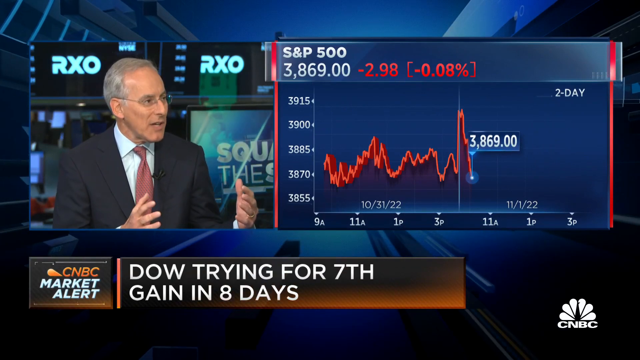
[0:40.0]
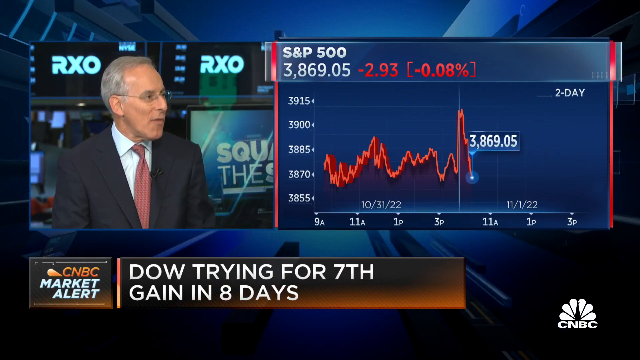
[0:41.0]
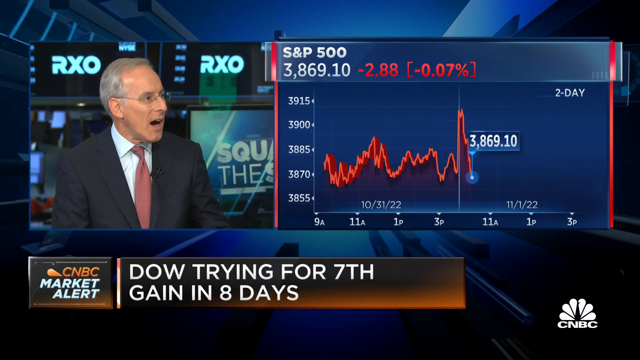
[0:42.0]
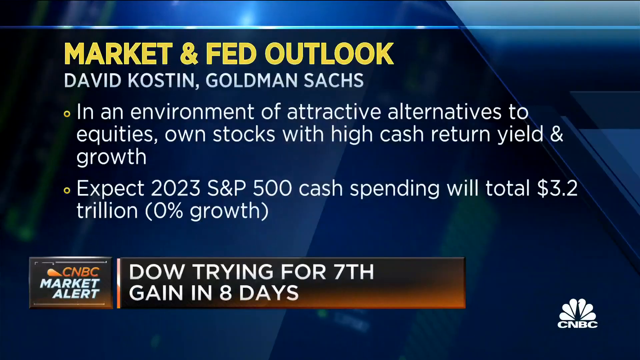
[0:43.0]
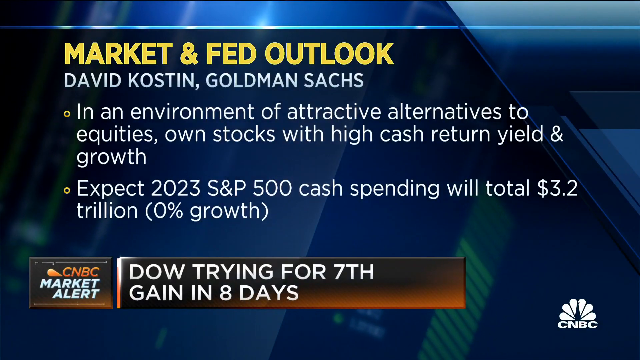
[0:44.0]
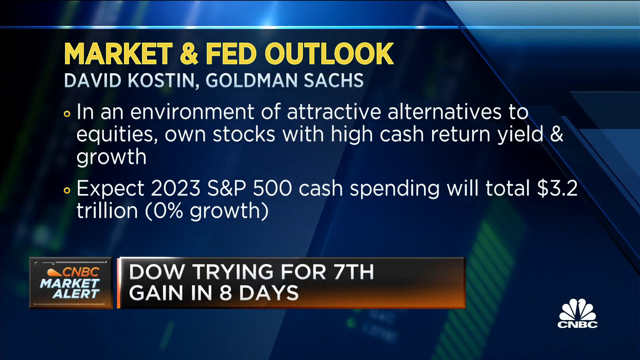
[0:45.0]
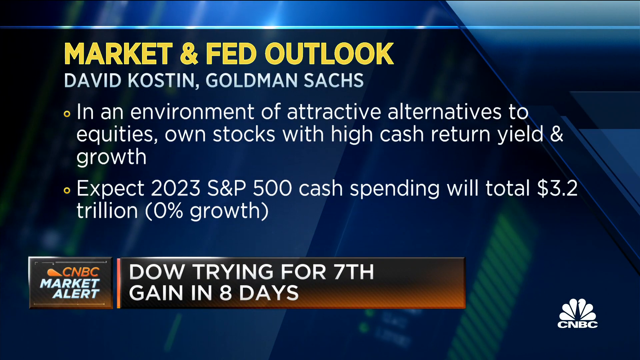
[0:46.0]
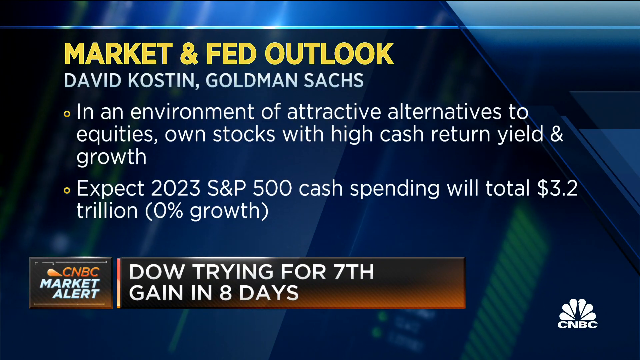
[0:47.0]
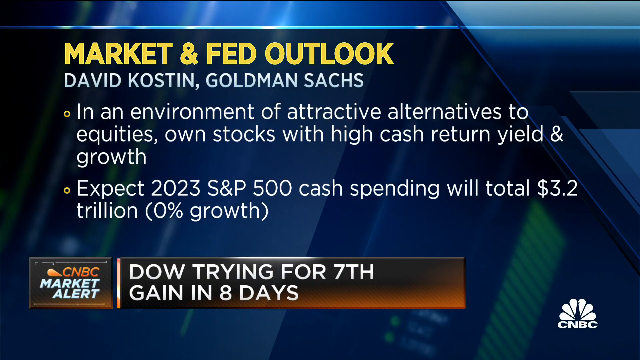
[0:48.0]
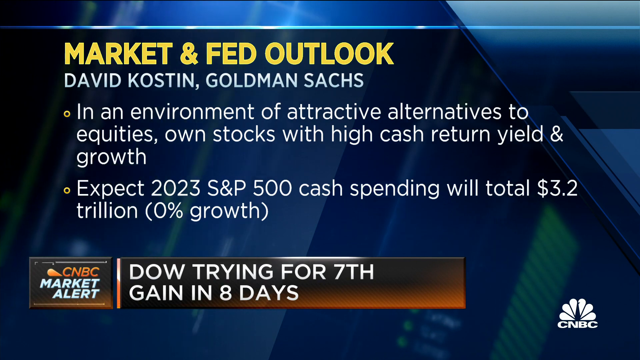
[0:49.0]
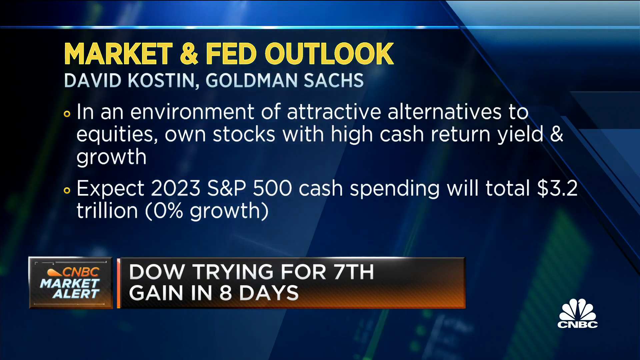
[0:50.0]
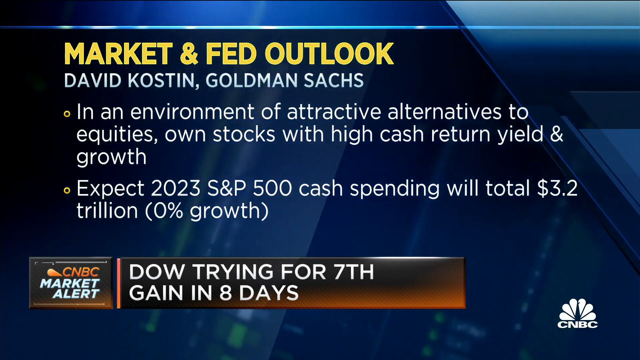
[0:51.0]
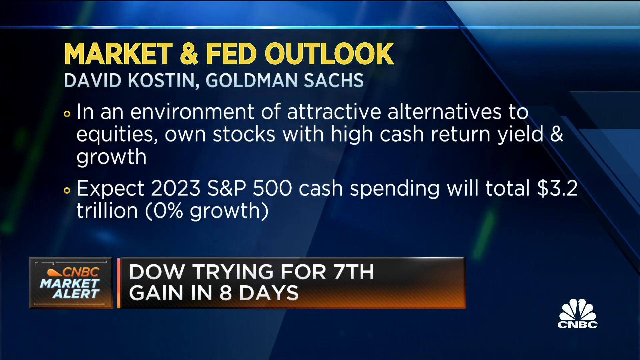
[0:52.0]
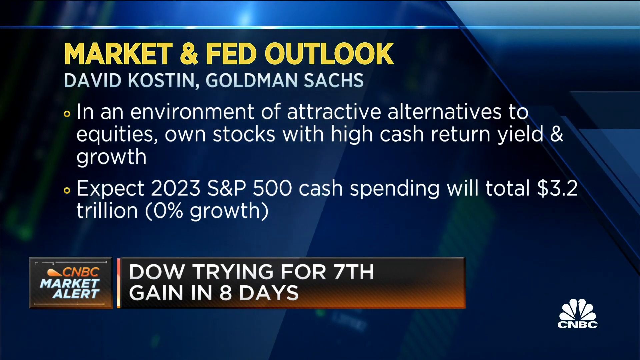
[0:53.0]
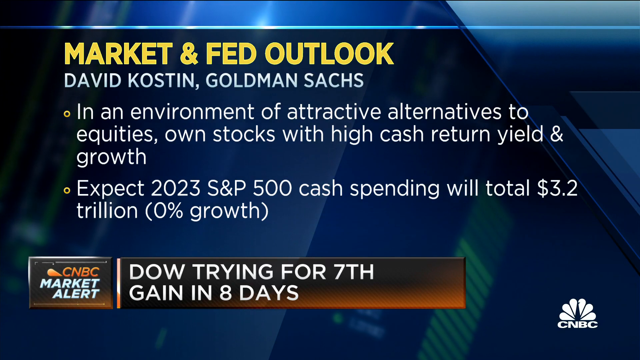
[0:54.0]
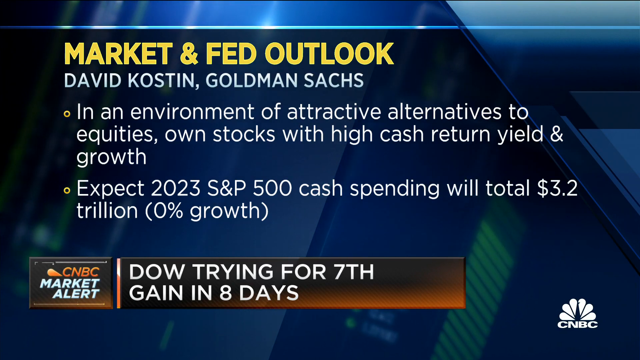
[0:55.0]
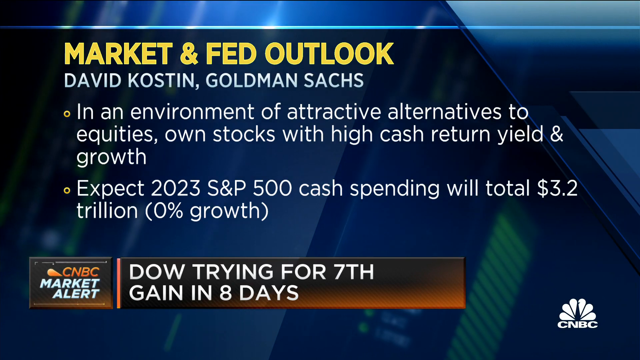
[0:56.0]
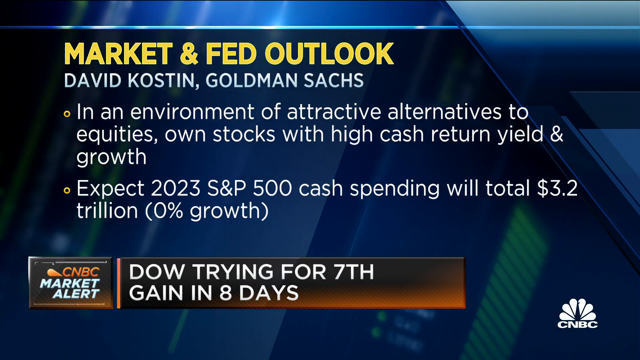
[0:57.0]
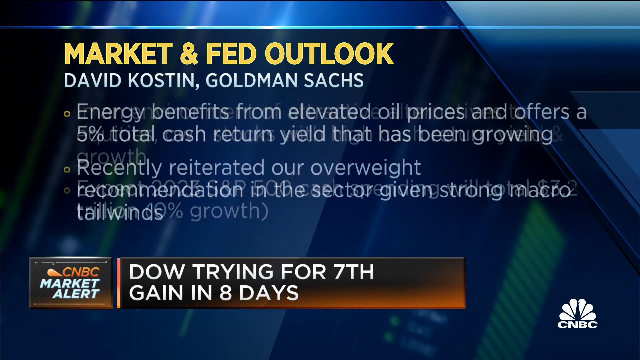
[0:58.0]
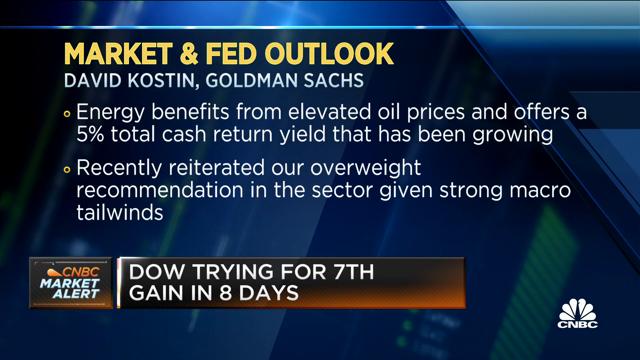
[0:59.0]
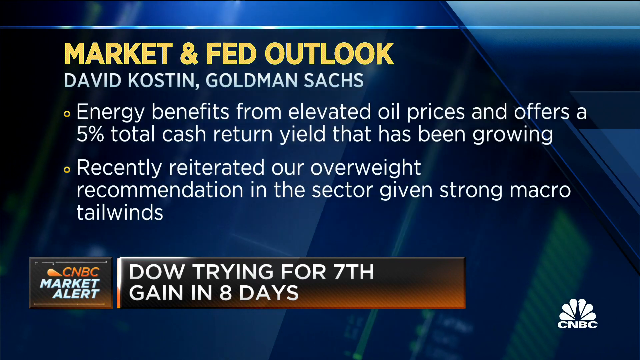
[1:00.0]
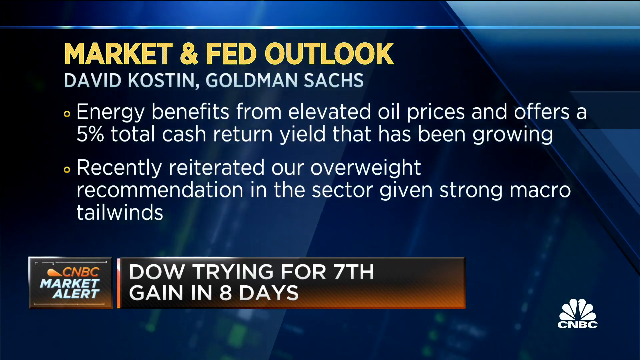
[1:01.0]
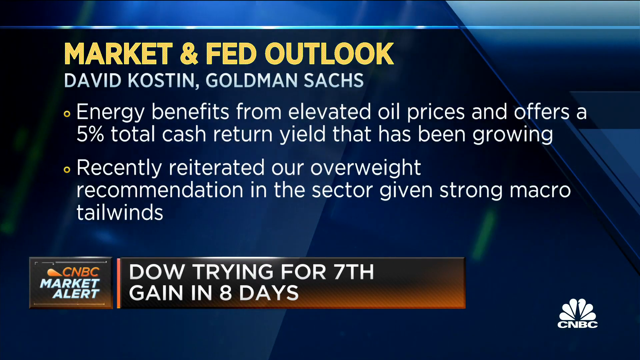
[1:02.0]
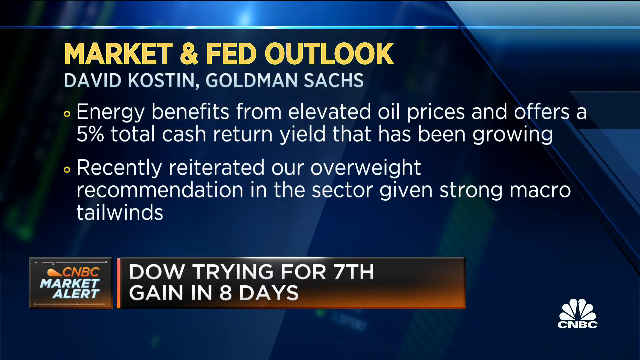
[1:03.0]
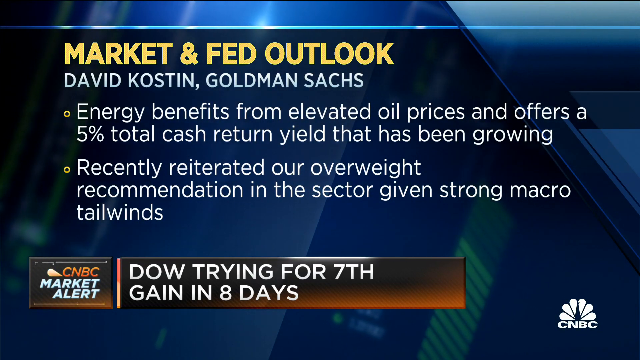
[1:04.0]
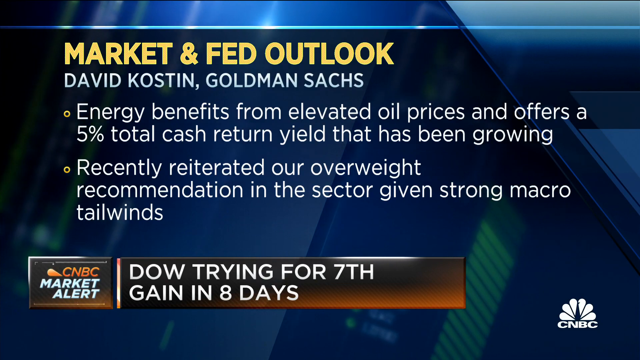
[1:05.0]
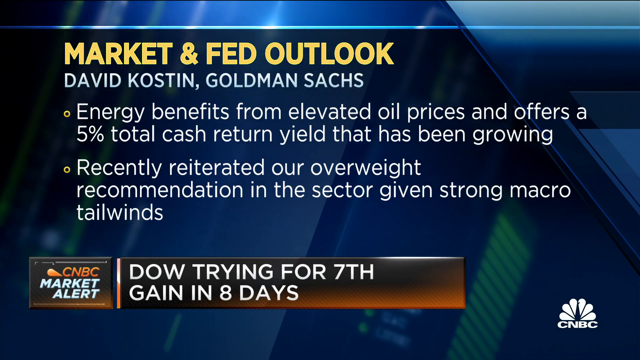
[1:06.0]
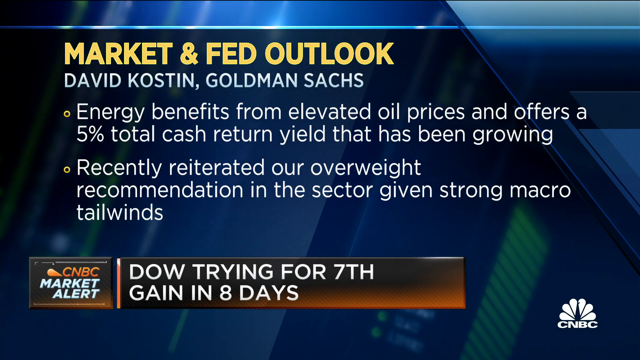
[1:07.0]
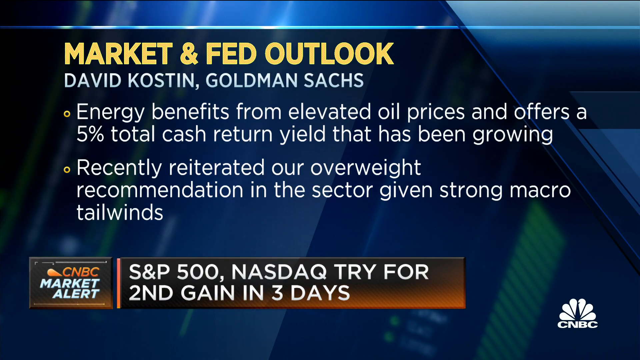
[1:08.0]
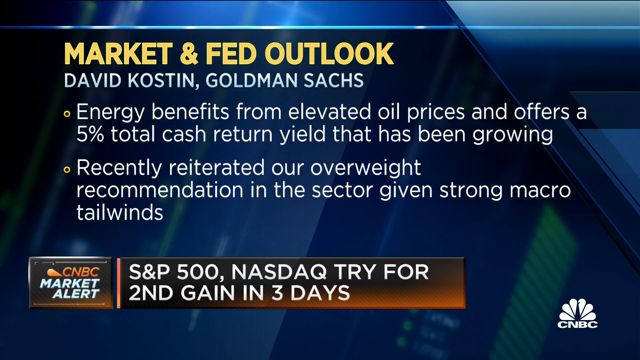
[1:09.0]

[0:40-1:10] On-screen text attributed to David Causton of Goldman Sachs lays out a market outlook: "in an environment of attractive returns to equities, own stocks with high cash return yield and growth", "expect 2023 S&P 500 cash spending with total 3.2 trillion, 0% growth", and "Energy benefits from elevated oil prices and offers a 5% total cash return yield that has been growing. We recently reiterated our overweight recommendation in the sector given strong macro tailwinds."